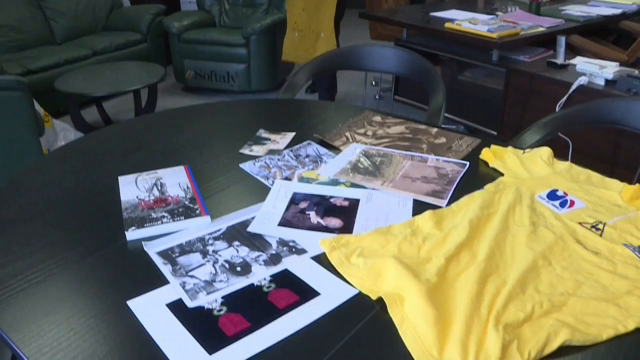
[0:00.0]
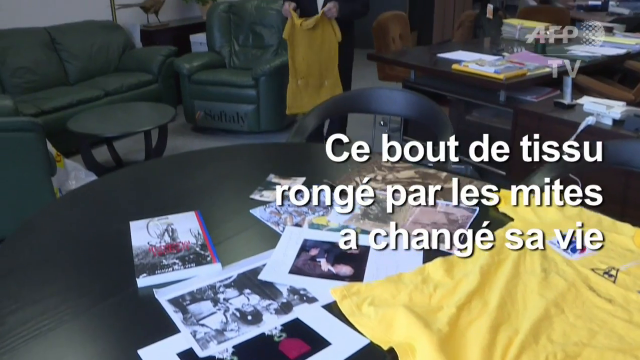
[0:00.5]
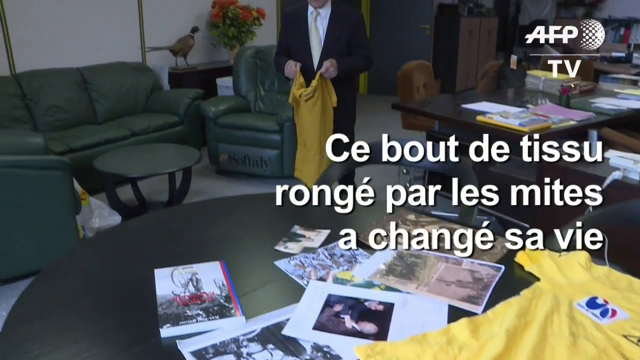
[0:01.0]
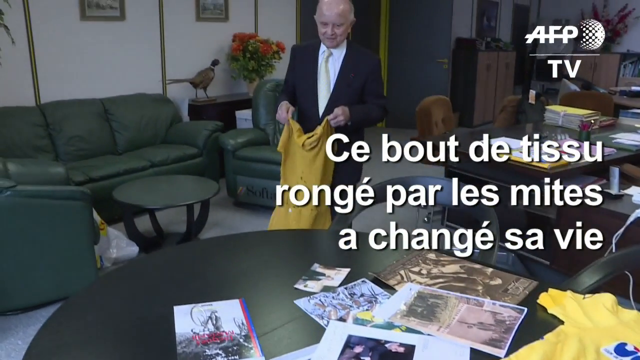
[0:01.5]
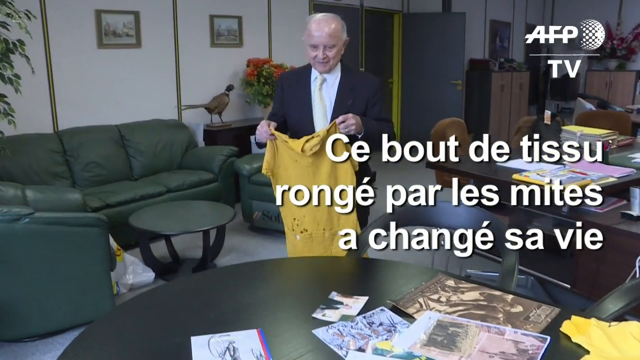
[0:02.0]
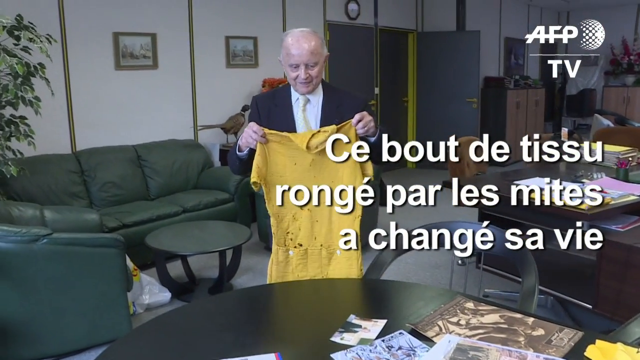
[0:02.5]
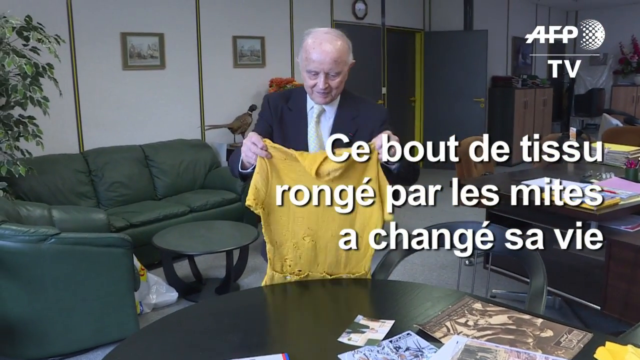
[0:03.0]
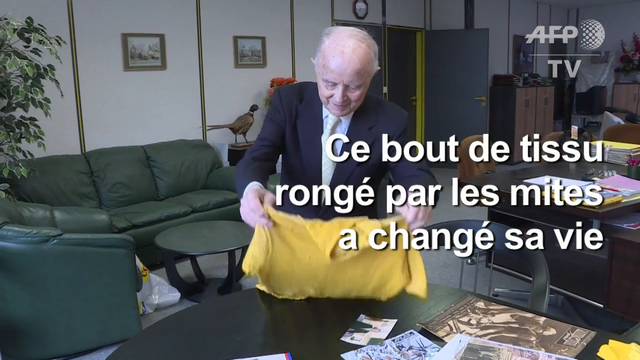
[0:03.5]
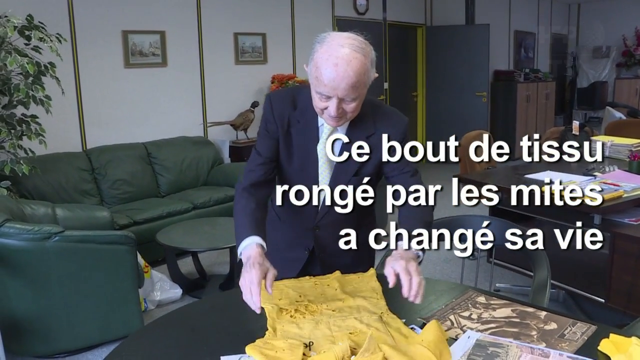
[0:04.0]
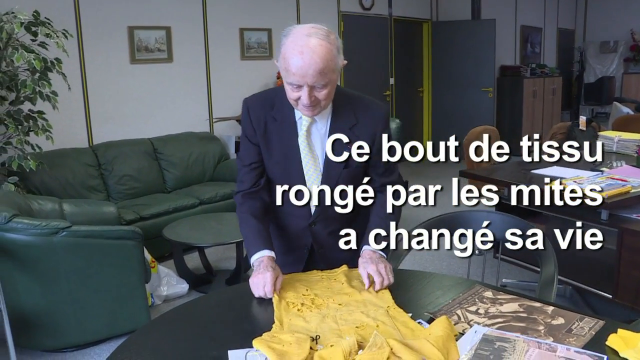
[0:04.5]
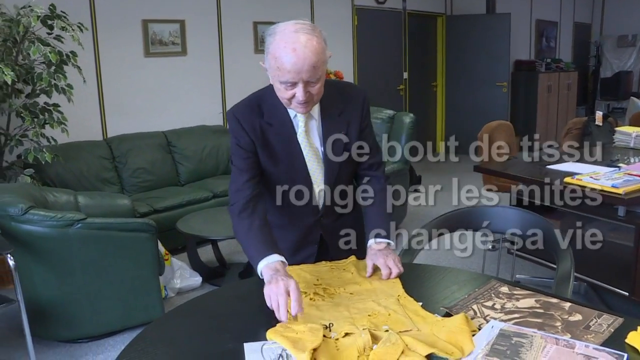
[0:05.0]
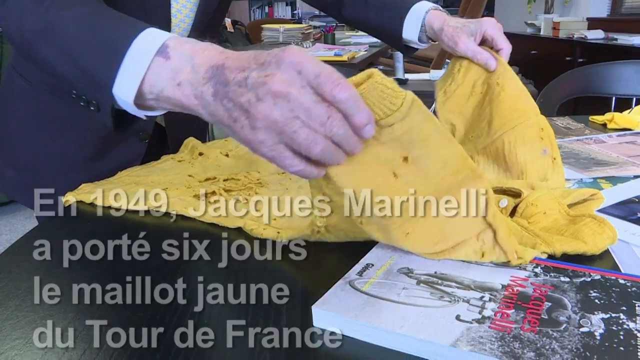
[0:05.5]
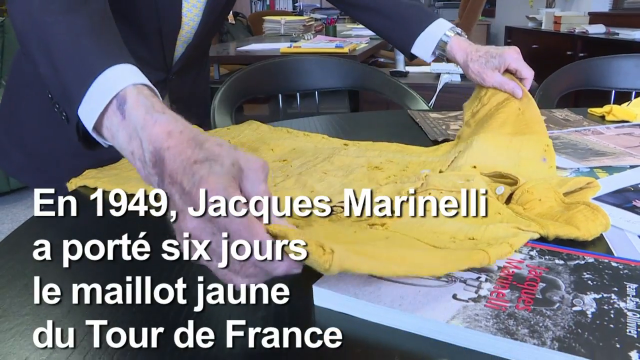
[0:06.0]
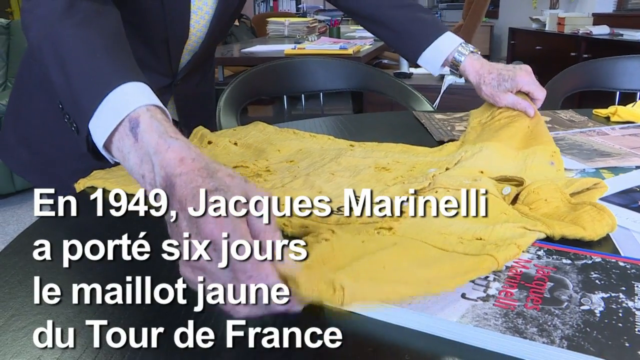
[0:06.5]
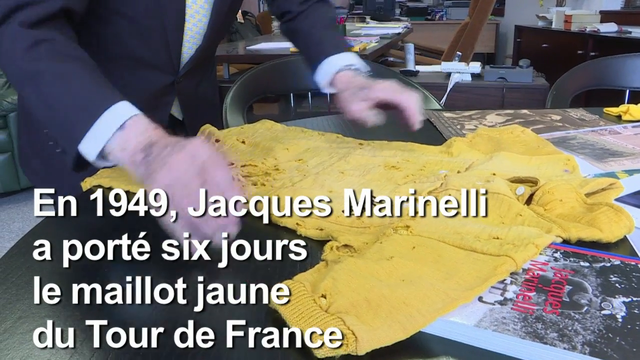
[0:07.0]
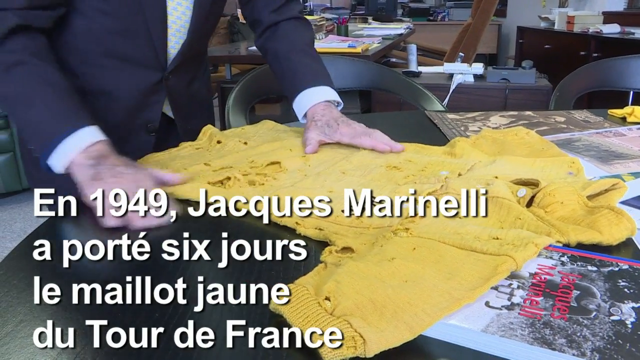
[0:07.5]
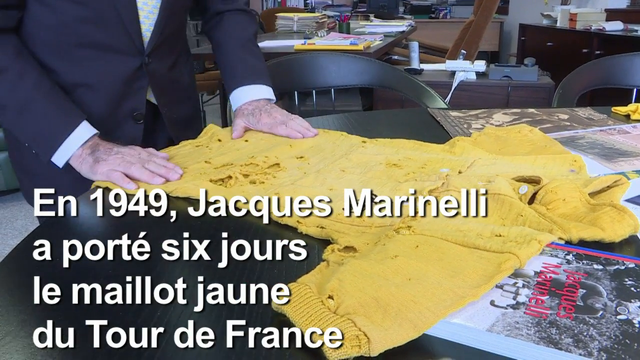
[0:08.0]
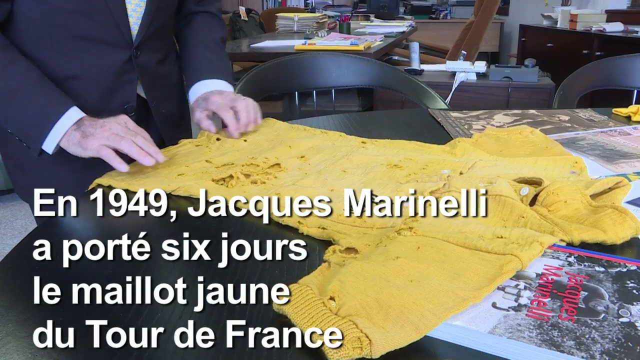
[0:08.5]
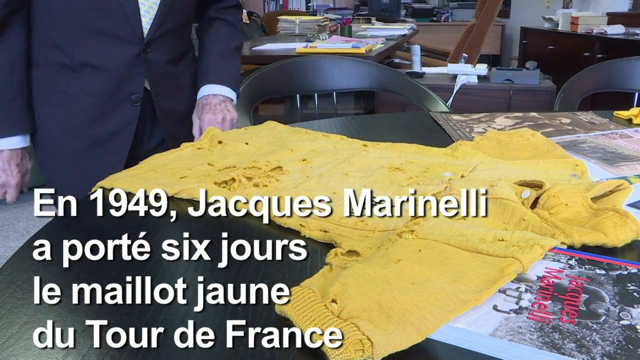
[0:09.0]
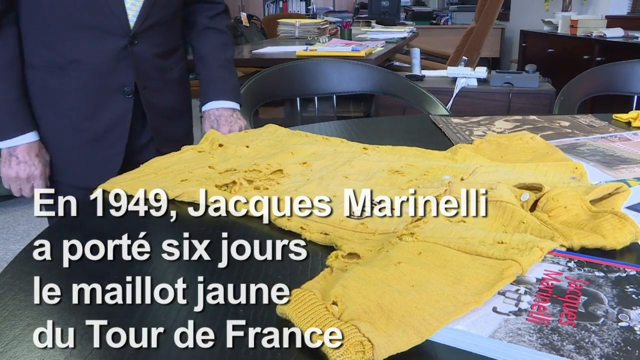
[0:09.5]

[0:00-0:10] The shot focuses mostly on a dark black table that comes across the bottom about two inches from the bottom edge, goes up almost to the center and then arches off the right side. Above it is a black chair. Pictures and images are scattered all across the table. In the bottom right corner is a yellow shirt stretched out, with one sleeve going up to the left and the other off the screen; it has two logos on it. To the right above this is a desk with cluttered papers all over it, with a brown chair to its left and another brown chair to its right. A man walks in, dressed all in black with a white shirt, carrying one of the yellow shirts. To his left is a green leather couch or chair, and next to that a green leather couch going off the left side. Between them is a table with a stuffed bird and a plant on it, and in front of the couch and chair is a table of the same green. The man walks in from the center as the camera pans up. In the top left corner the text reads "A. F. P." with a little circle made of black and white dots, below that "T. V.", and below that foreign-language text that looks like French. He is an elderly gentleman with gray hair. He walks toward the table holding the shirt with his fingers on the shoulder parts; the back of the shirt has holes toward the bottom, and the front faces him. Looking down at it, he raises it up and lays it down on the table, then uses his fingers to kind of spread it out a little. Text pops up in the bottom left corner as the camera zooms in on the shirt from a side angle, the neck pointing upward and the arms out to the side. He rubs it down with his hand as he lays it flat. It looks like it has blood or mud on it.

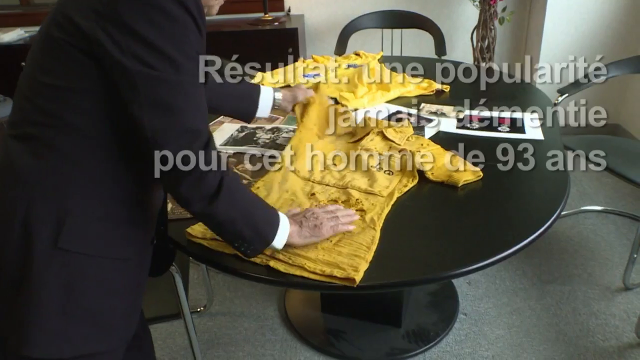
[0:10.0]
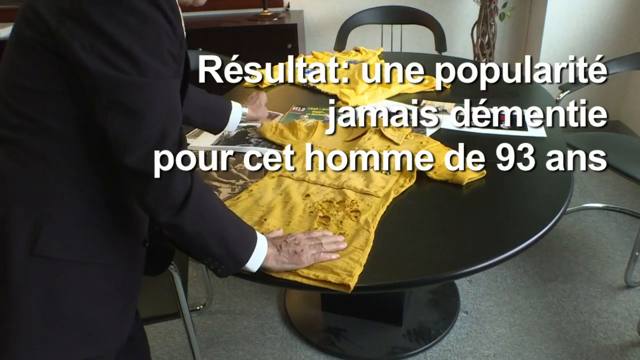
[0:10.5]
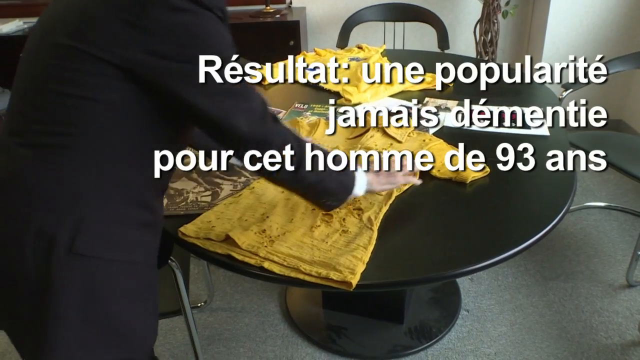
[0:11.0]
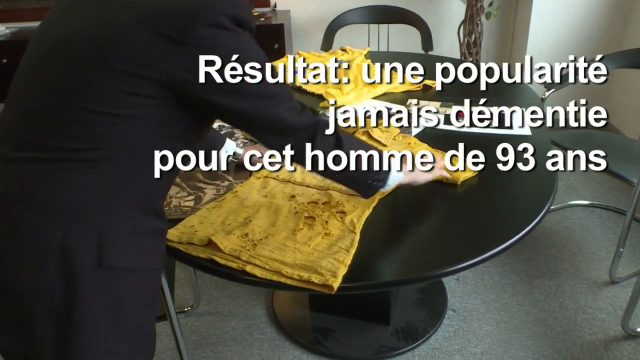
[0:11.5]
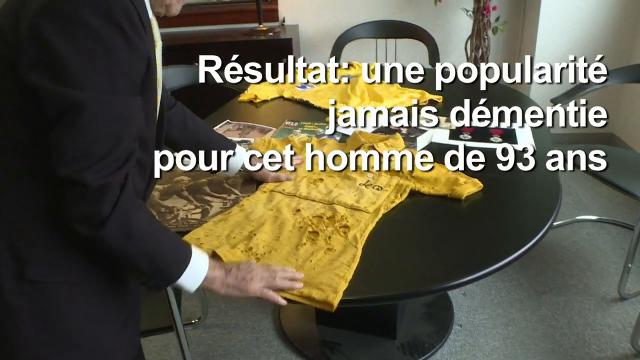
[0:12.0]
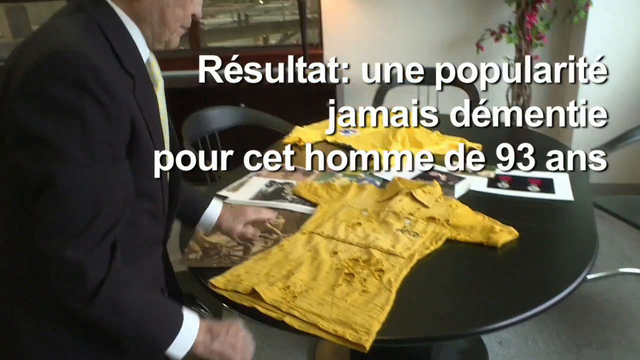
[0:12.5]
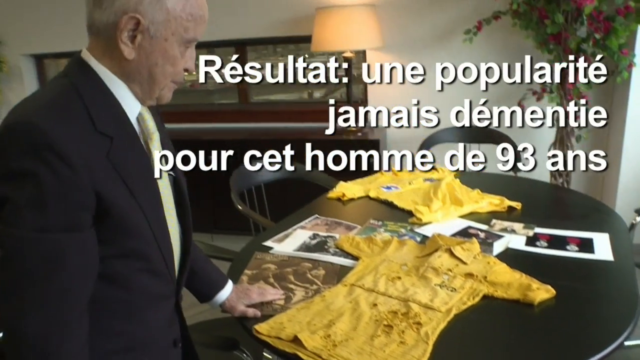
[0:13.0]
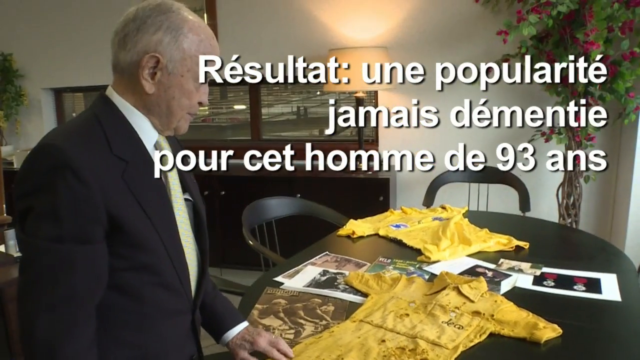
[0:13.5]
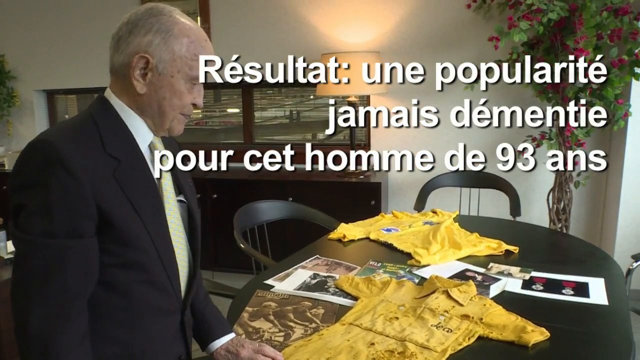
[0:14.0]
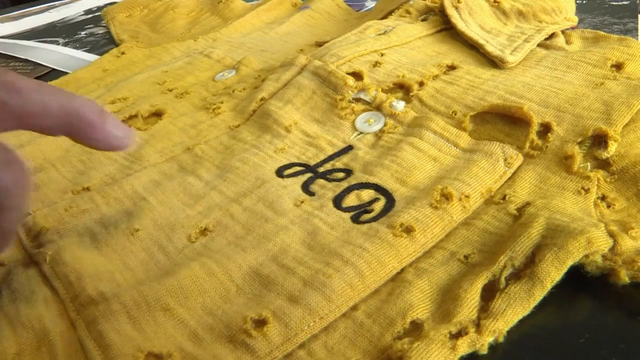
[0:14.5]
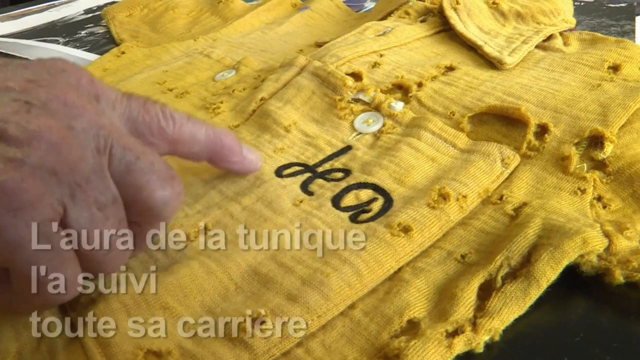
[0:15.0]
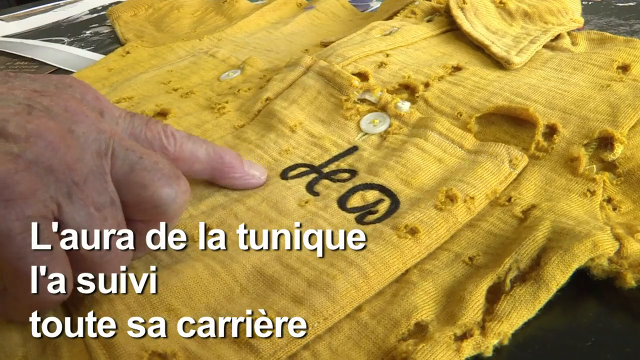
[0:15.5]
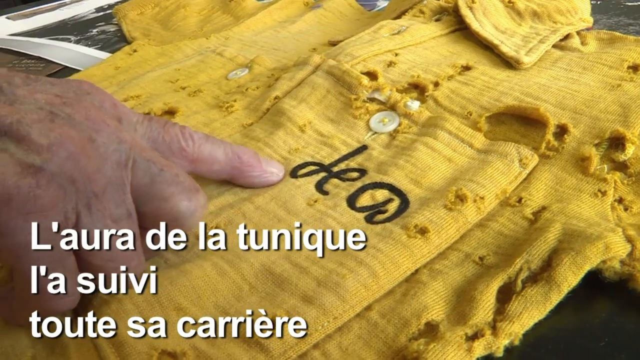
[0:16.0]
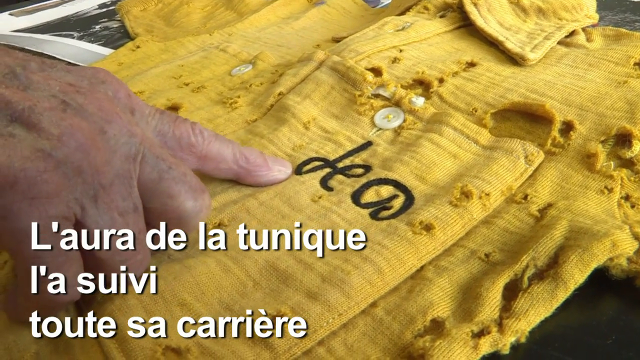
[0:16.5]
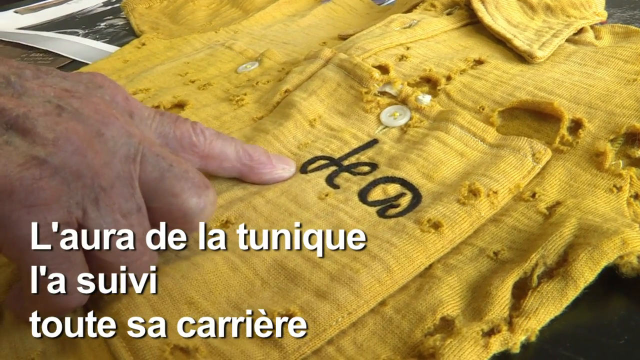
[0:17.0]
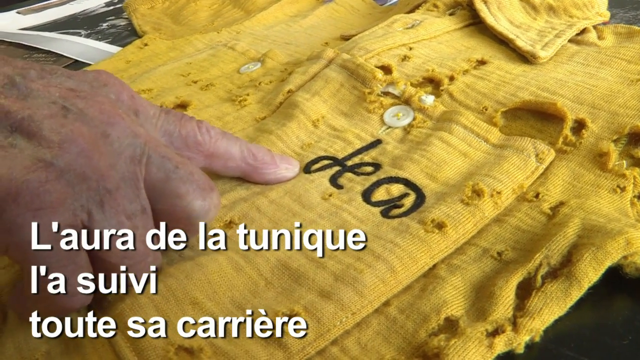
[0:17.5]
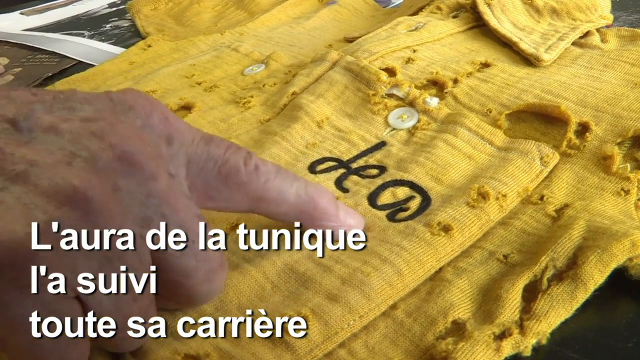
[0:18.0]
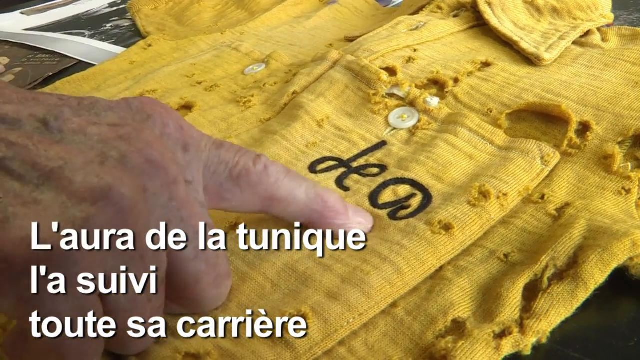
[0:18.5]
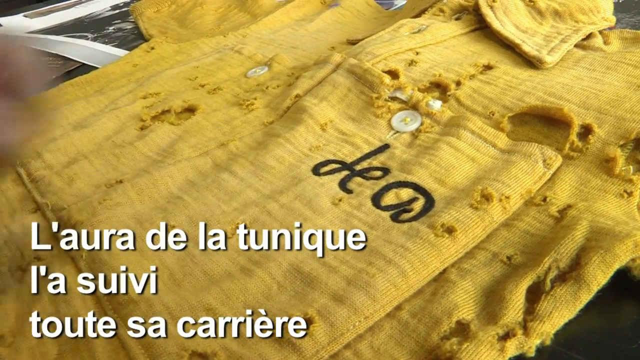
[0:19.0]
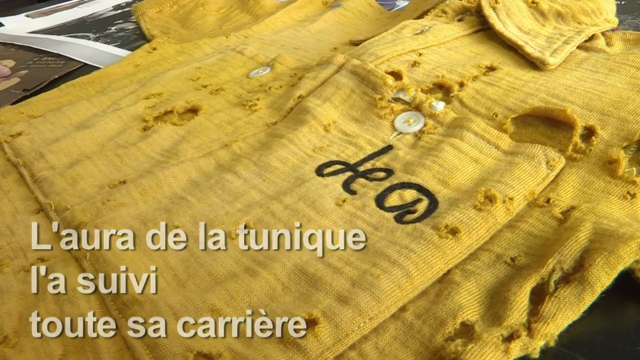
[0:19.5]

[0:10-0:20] The shot now shows the table in the center from the opposite side, where the man is; he has moved slightly to the left. A white wall runs across the back from the right, with a plant about halfway over. A desk is down the left side wall, and a black chair is on the opposite side of the table. On the table, a white shirt is in the distance at the top portion, while the shirt he just laid down faces the camera, its bottom down to the left, laid out flat. Dark carpet is visible. The man, in a suit, stands at the left side of the table with his arms stretched out, one palm down on the shirt and the other hand straightening the shoulder and sleeve area. More foreign-language text appears across the top. He spreads out the shirt's arms wider, readjusts the bottom, then steps back and stands up, looking down at it. The camera moves up slightly; he looks to be about 70, balding on top with gray hair on the sides. A close-up then shows the right side of the shirt's chest, where a pocket says "Leo". Seen up close, the shirt is yellow and has a great many holes and tatters. His hand comes in from the right side, the back of his knuckles visible, his pointer finger pointing down at the lettering, then moving a little to the right to point at a different letter.